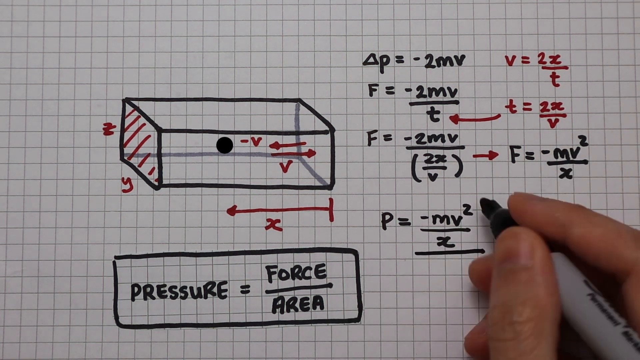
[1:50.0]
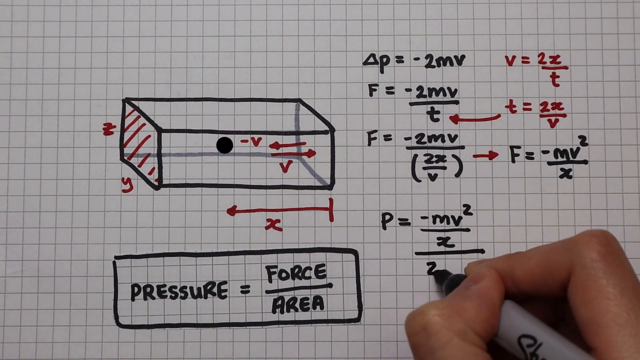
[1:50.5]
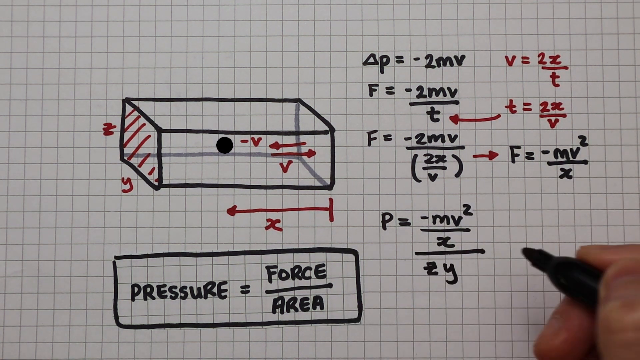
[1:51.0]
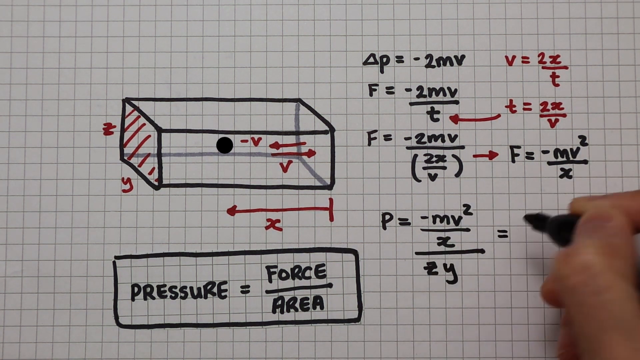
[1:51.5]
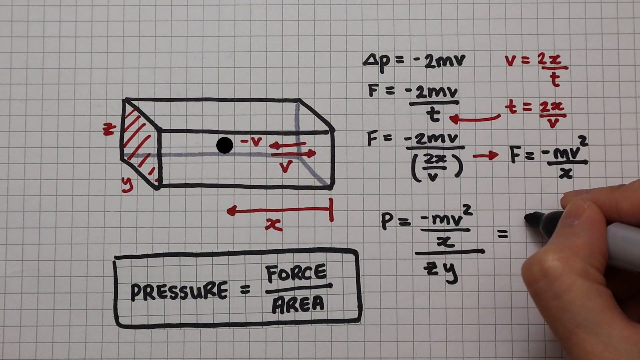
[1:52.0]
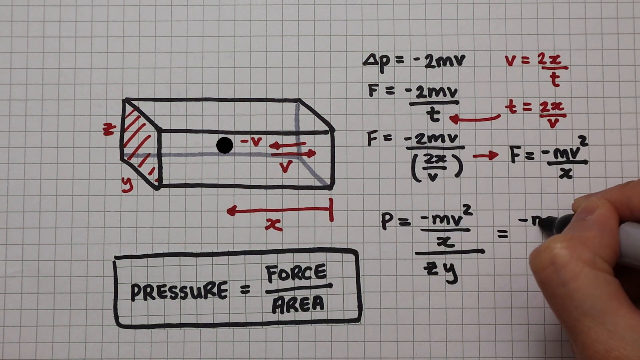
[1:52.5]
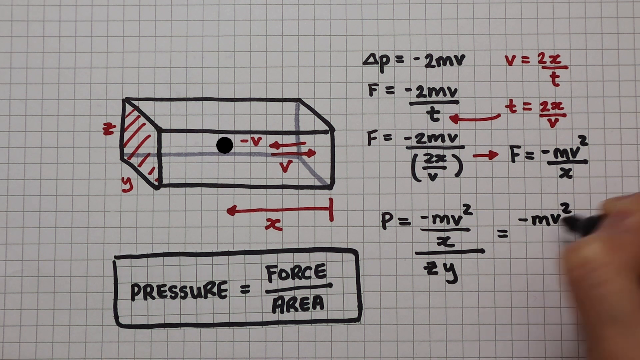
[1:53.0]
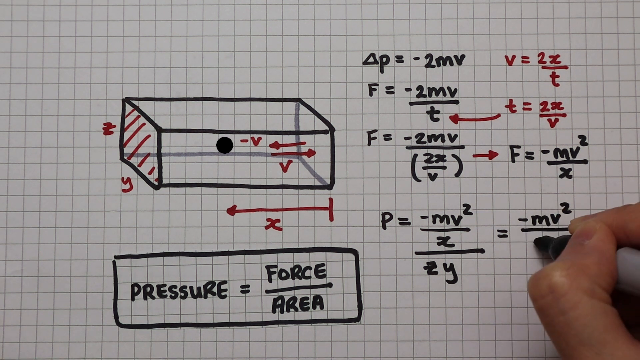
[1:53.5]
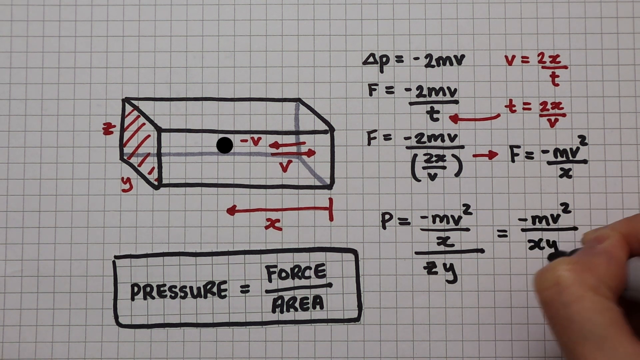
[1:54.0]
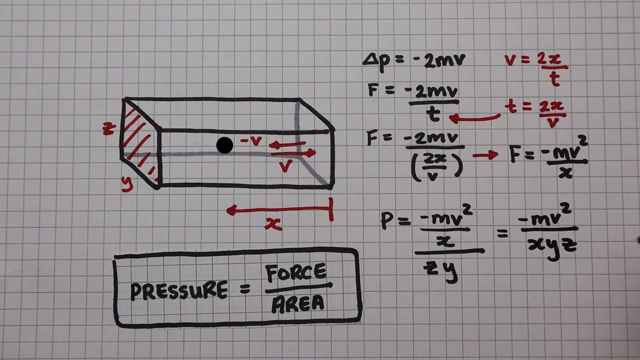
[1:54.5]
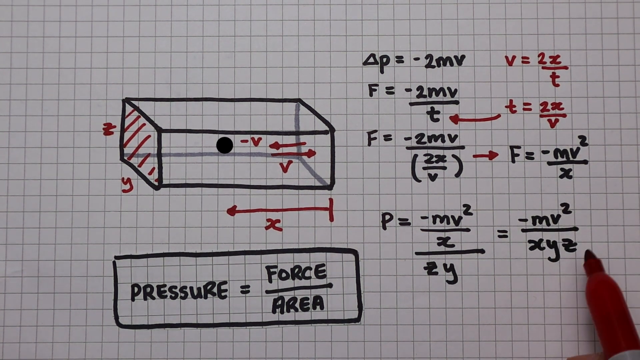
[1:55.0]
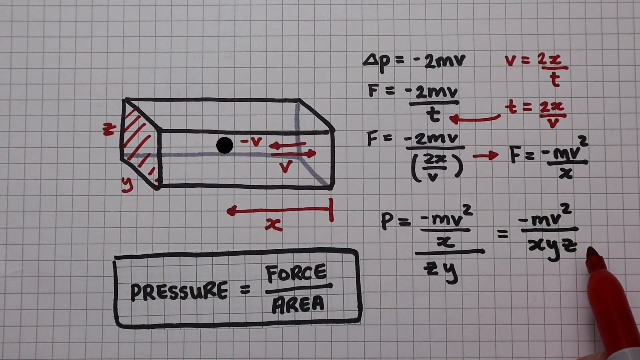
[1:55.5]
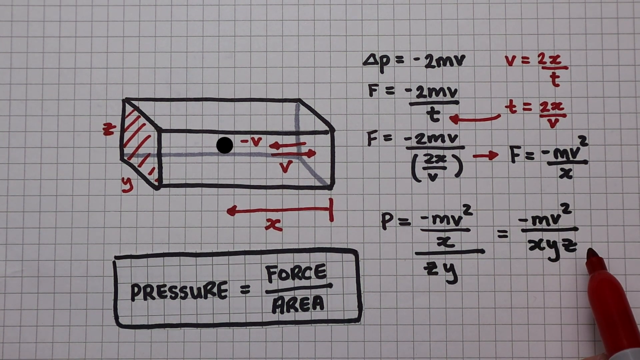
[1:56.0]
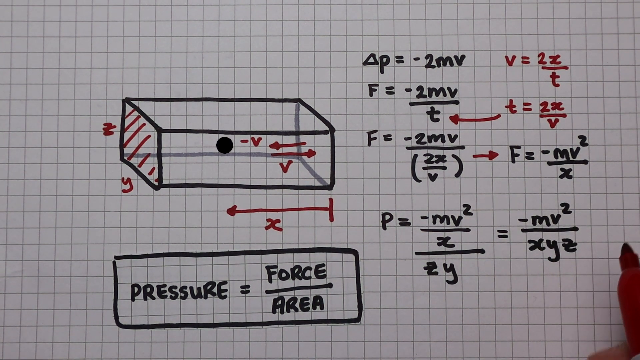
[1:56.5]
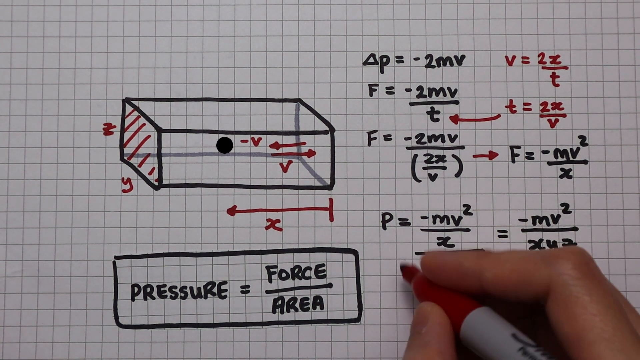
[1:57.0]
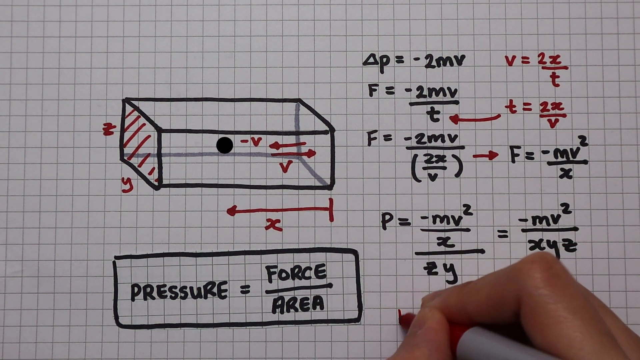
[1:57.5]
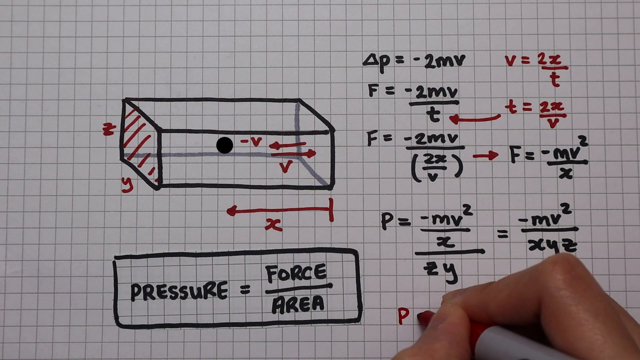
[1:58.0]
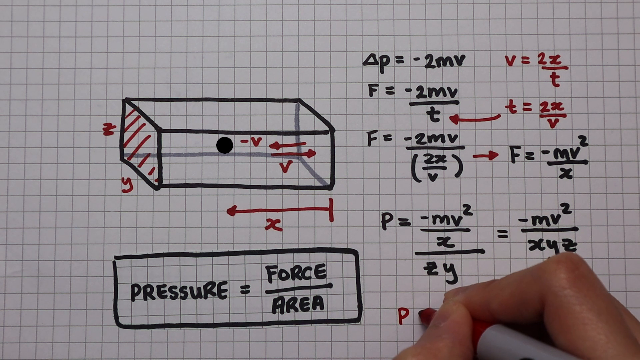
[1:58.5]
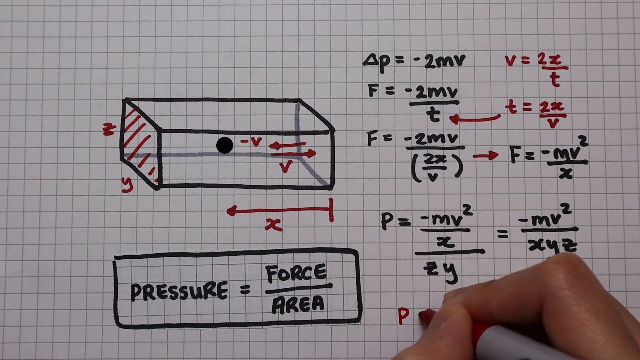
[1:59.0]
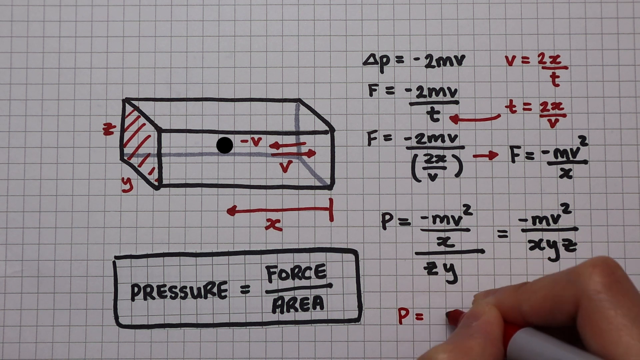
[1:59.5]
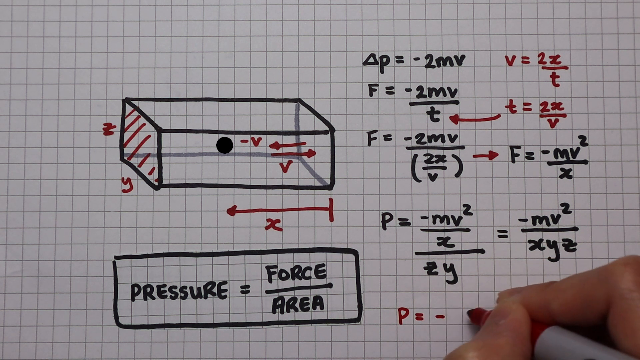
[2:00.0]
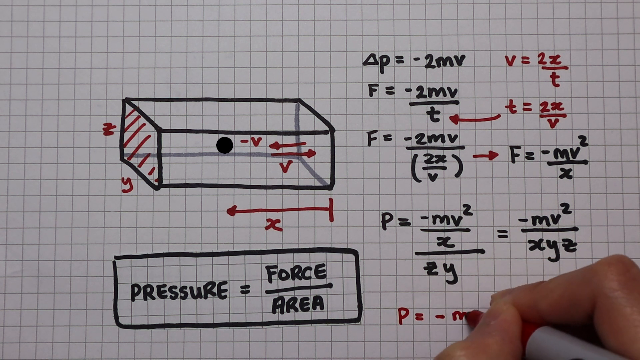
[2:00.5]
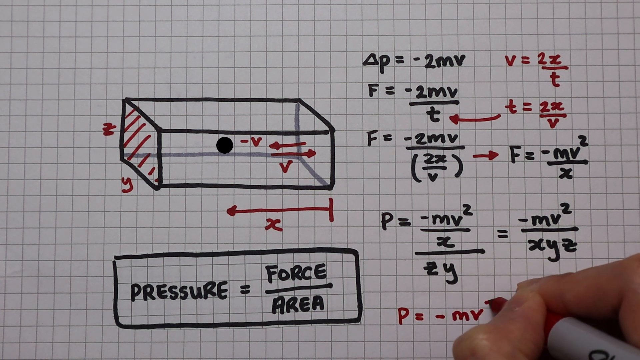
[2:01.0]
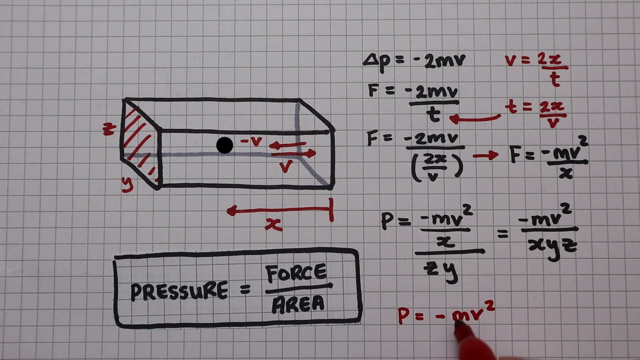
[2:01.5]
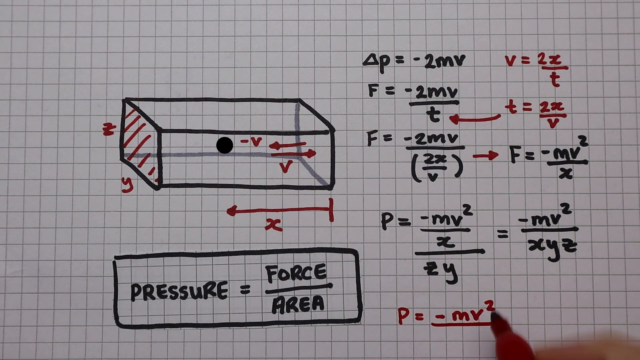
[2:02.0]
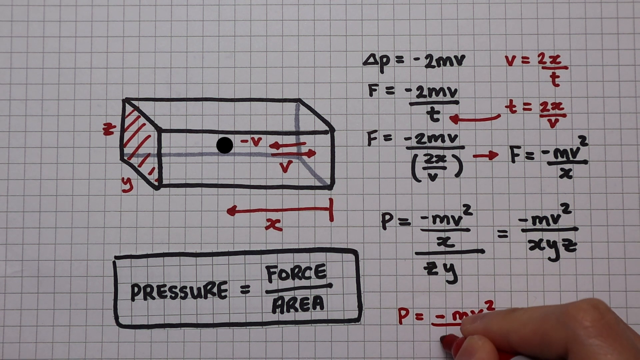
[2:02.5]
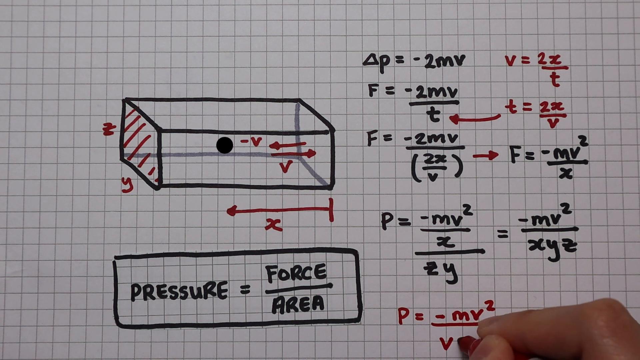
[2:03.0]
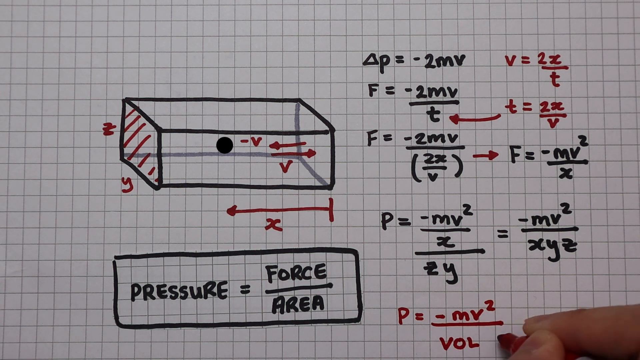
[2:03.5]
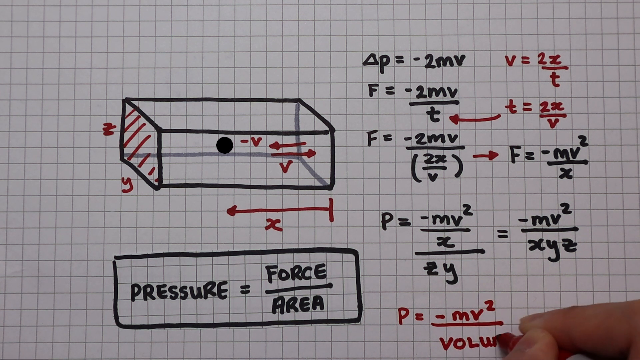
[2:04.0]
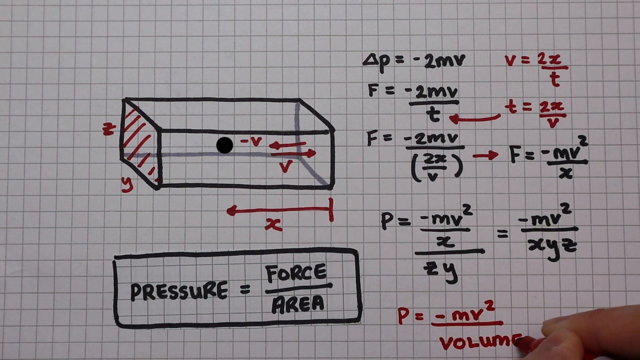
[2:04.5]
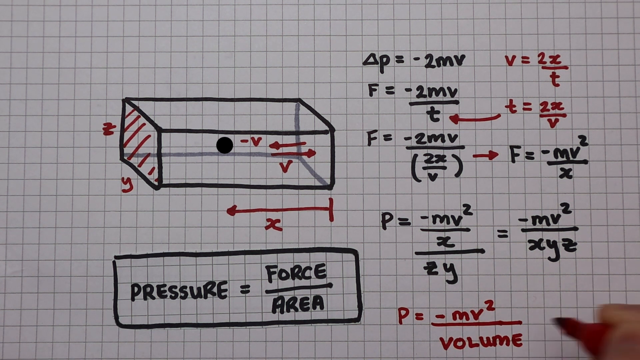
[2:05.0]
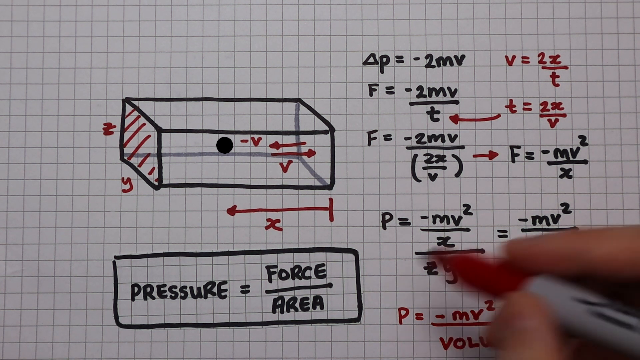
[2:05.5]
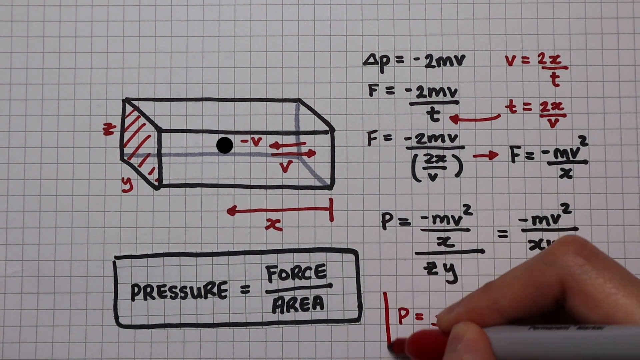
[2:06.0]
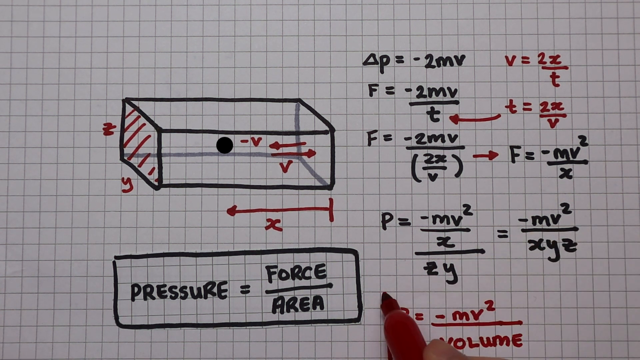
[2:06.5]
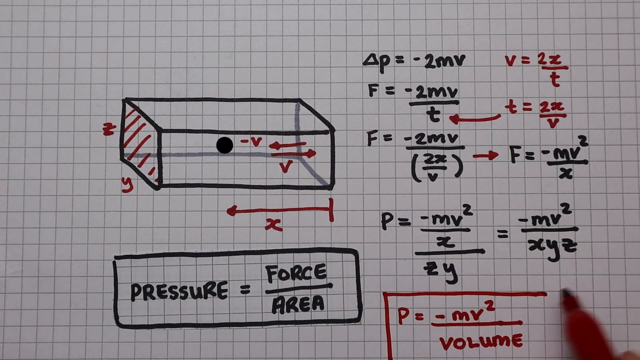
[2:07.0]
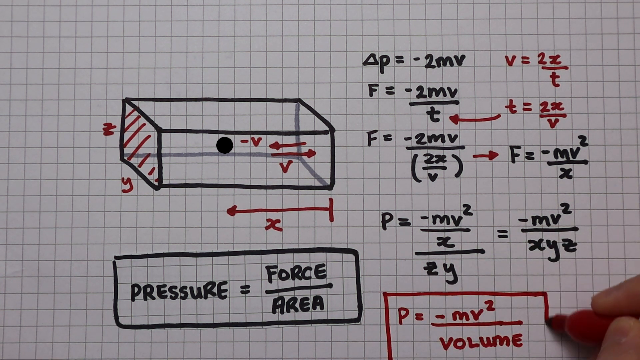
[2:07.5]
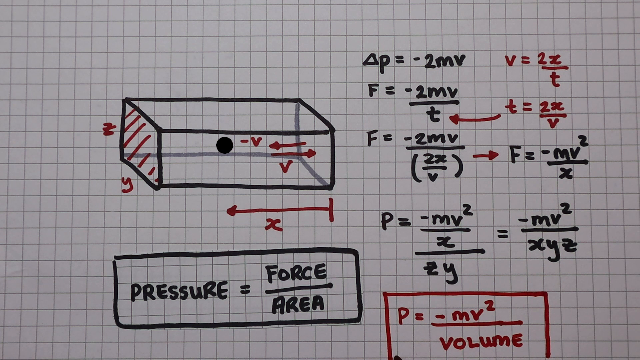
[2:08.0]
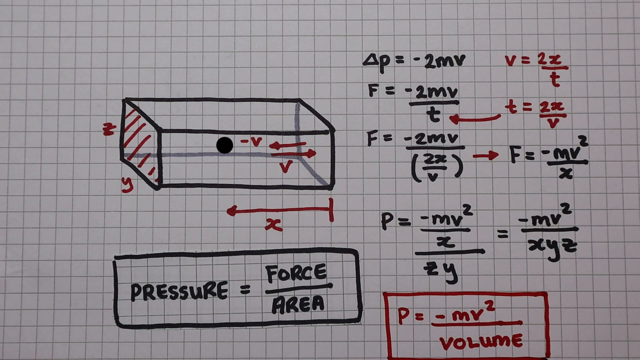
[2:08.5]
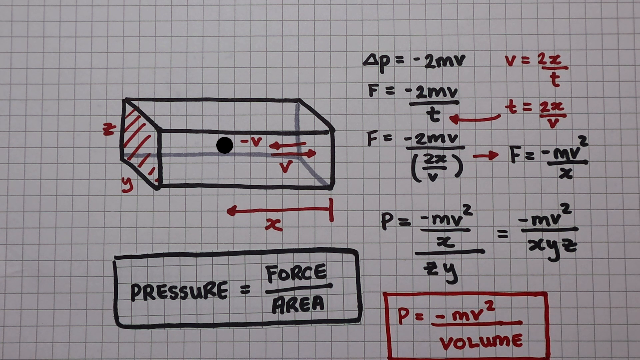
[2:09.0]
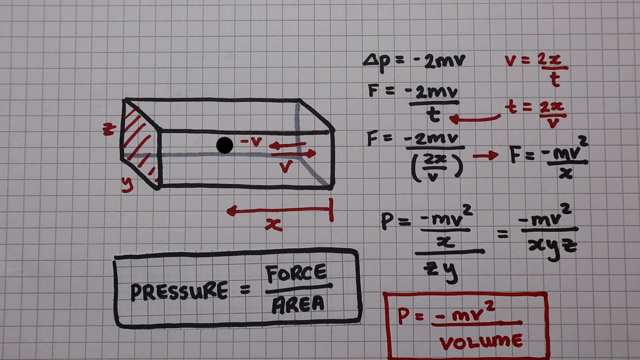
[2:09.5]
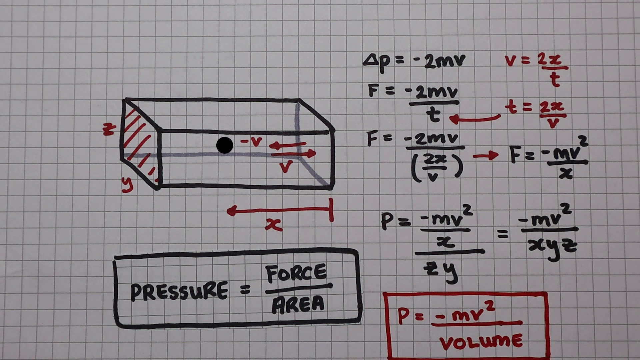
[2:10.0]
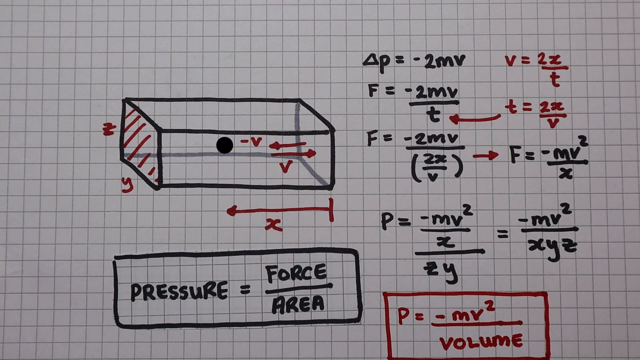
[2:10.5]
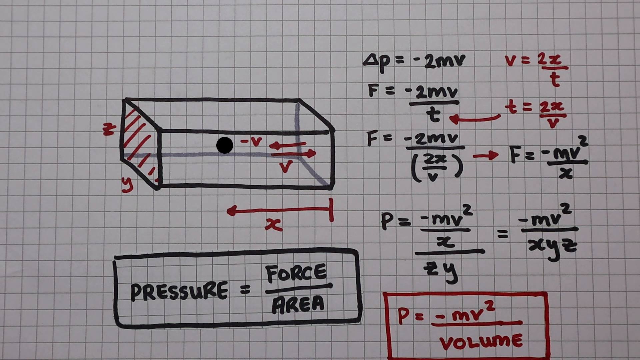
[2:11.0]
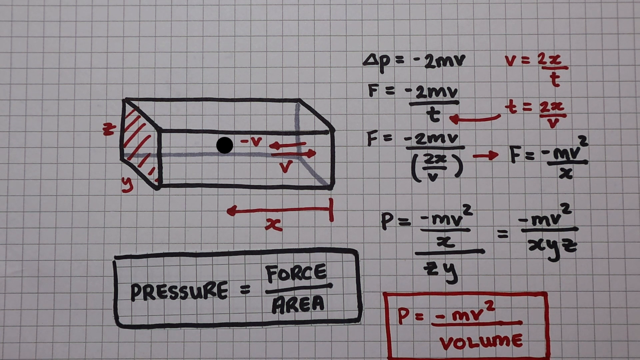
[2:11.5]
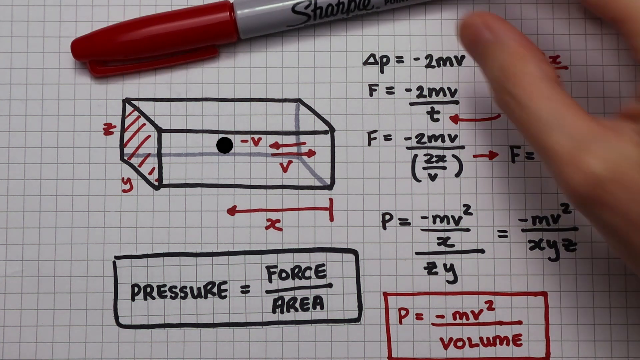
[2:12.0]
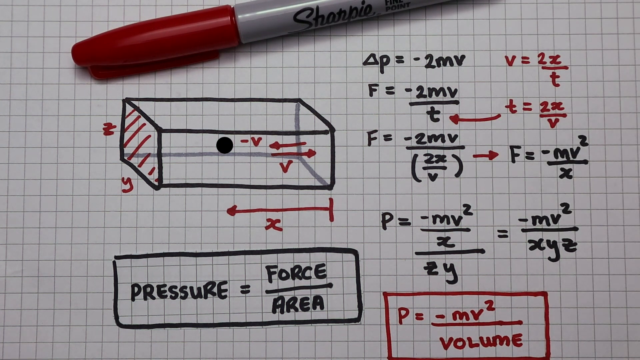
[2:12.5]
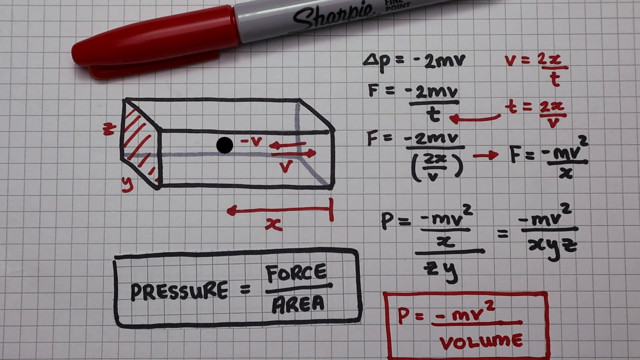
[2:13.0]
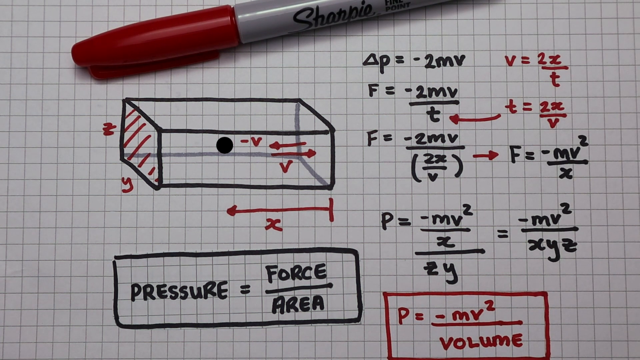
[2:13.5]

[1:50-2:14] On the fourth line down is an equation with P = MV2 over X, equaling minus MV2 over X, Y and Z. Holding a red marker, the person writes "P = -MV2 over volume" and draws a red line around that statement, starting on its left side and moving around the corner and across to box it in. The right hand then lays the pen at the top of the paper: the red tip is on the left side, and the pen runs diagonally up toward the top right corner, going off the page about an inch from the corner. It is a red-tipped marker with a gray area bearing the word "Sharpie". The hand leaves the pen there.